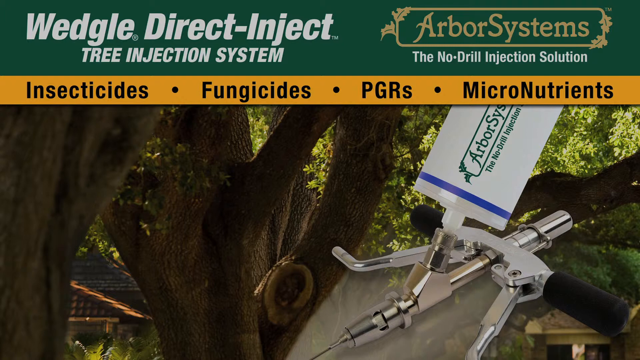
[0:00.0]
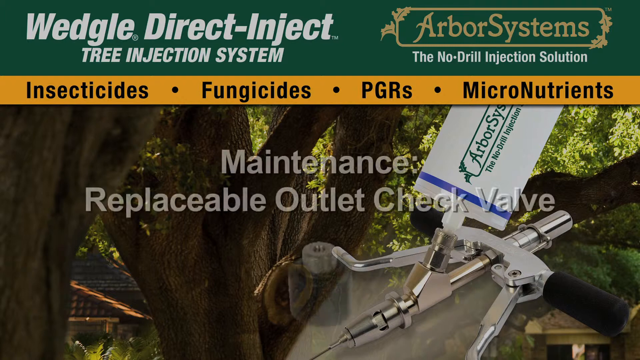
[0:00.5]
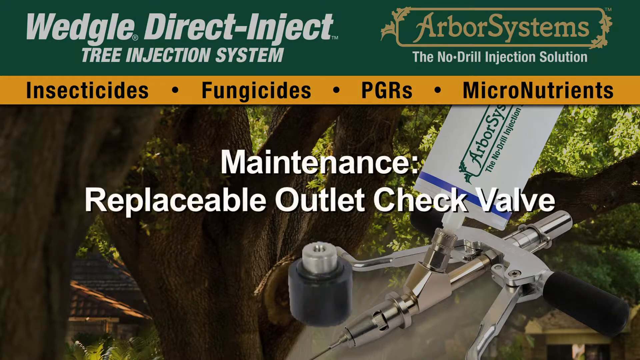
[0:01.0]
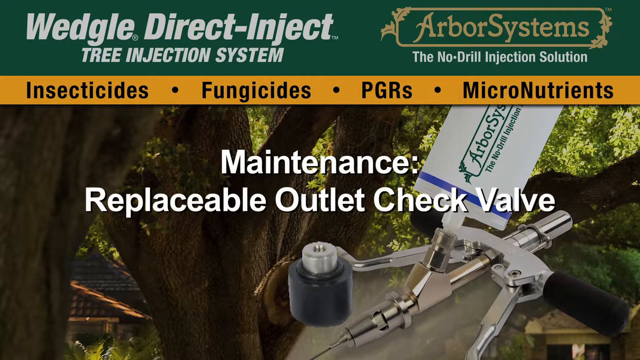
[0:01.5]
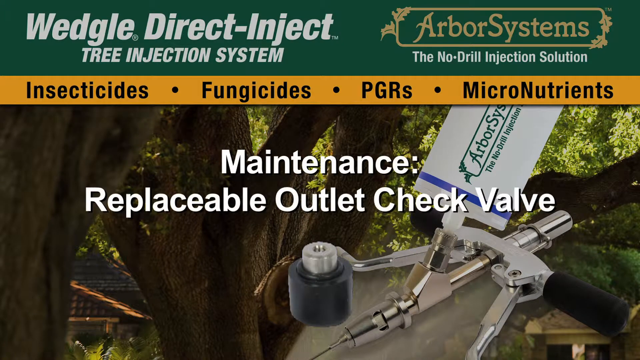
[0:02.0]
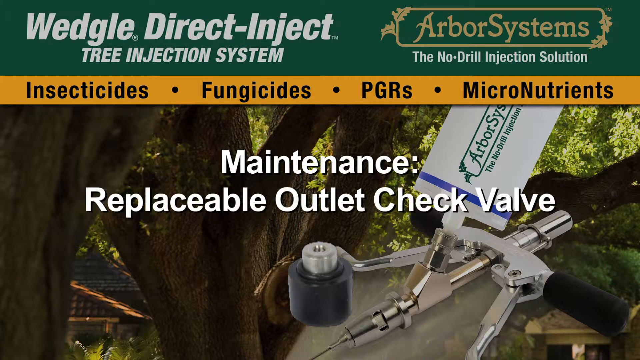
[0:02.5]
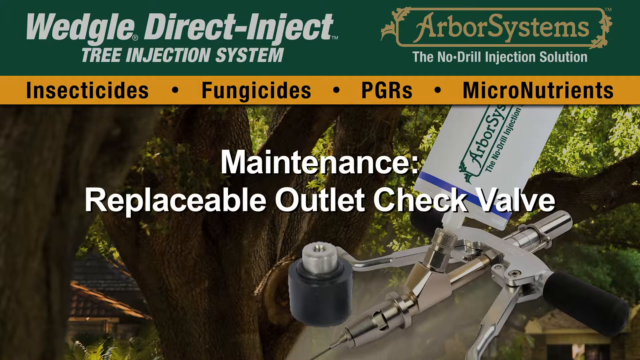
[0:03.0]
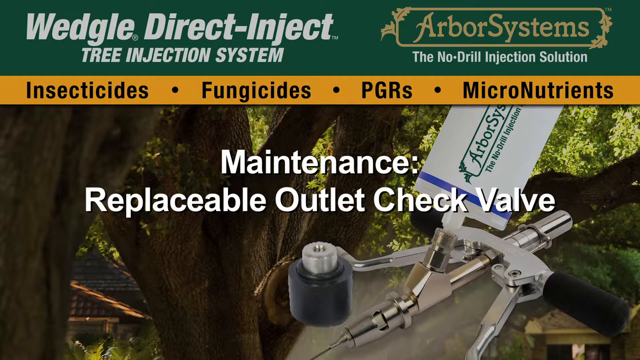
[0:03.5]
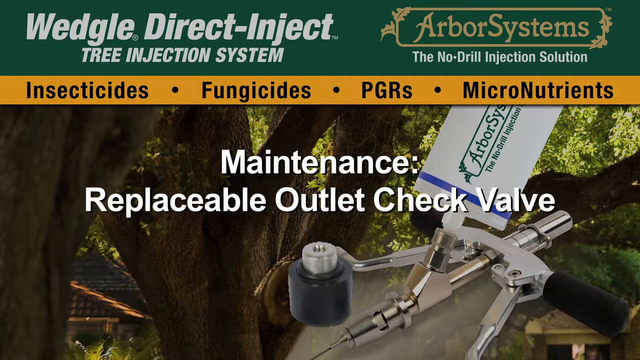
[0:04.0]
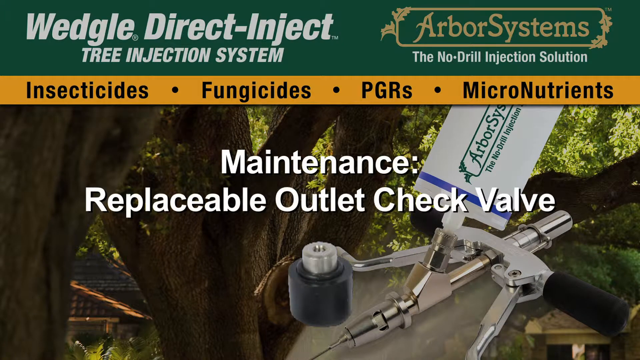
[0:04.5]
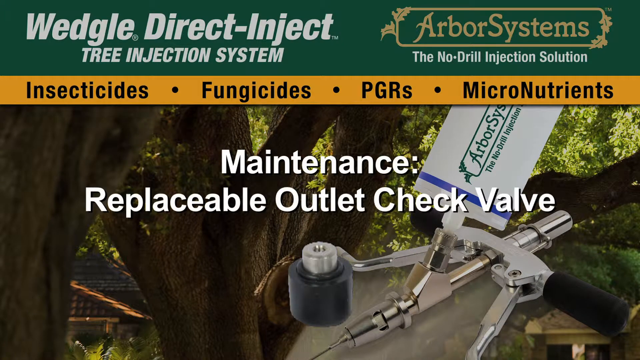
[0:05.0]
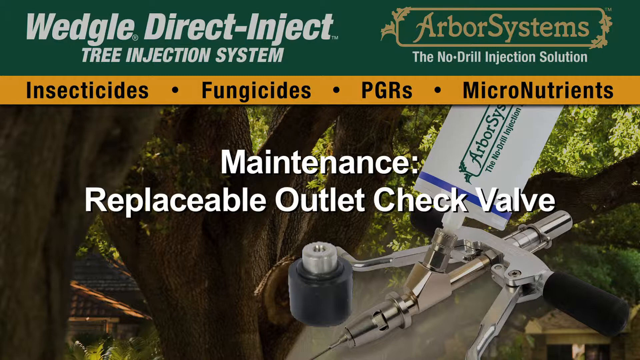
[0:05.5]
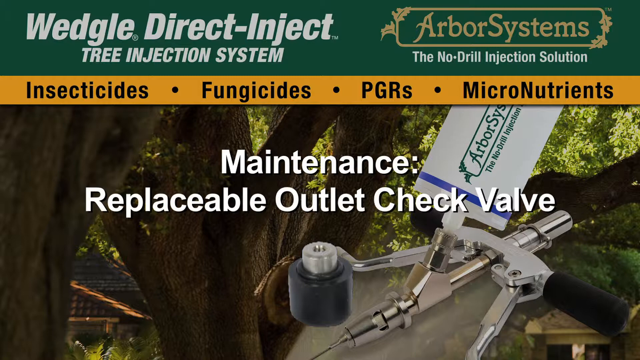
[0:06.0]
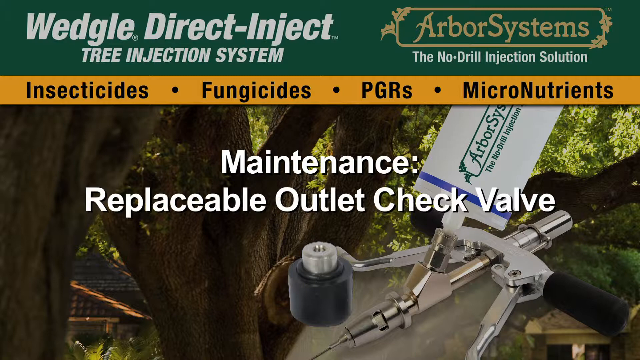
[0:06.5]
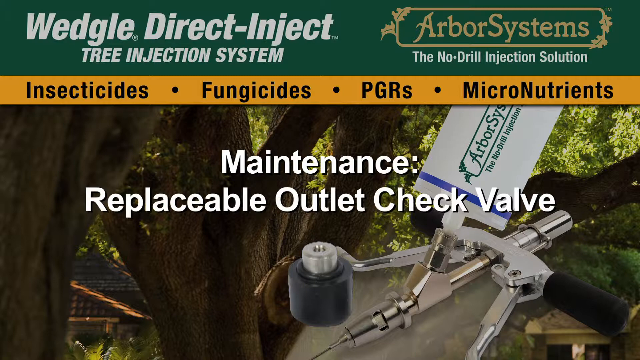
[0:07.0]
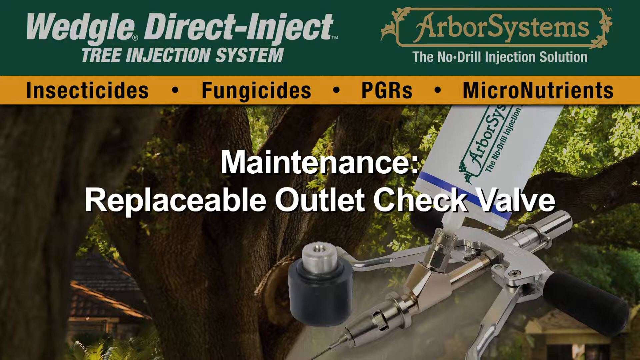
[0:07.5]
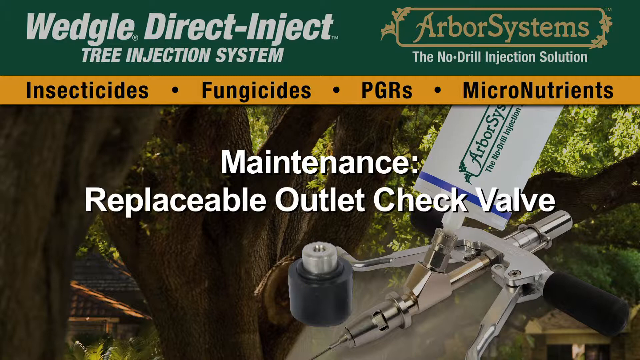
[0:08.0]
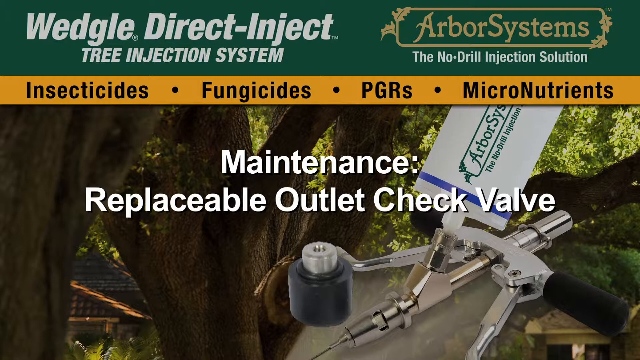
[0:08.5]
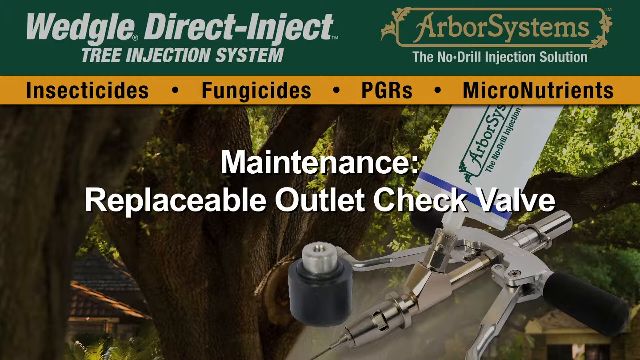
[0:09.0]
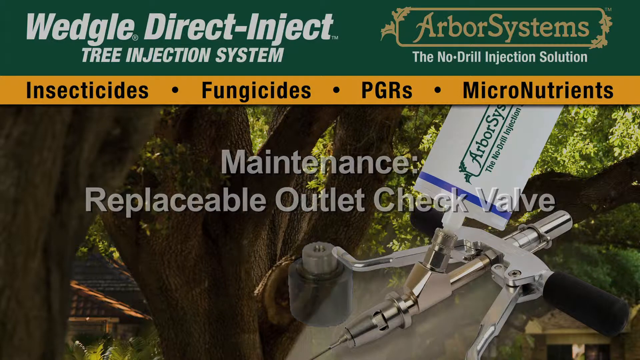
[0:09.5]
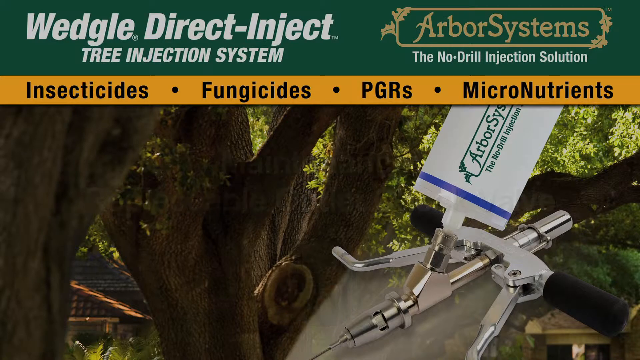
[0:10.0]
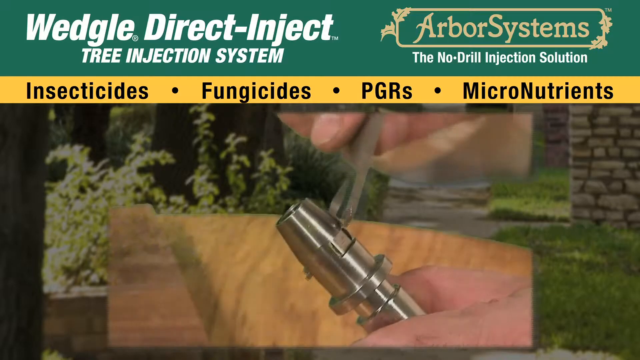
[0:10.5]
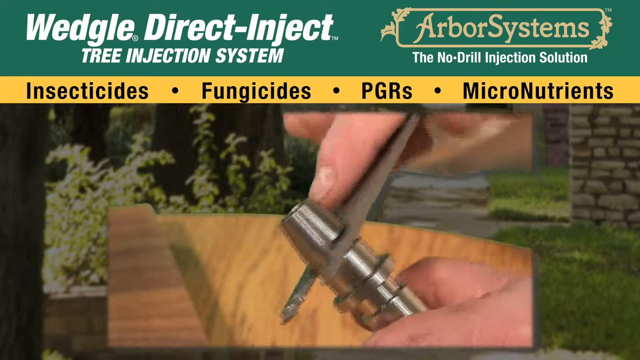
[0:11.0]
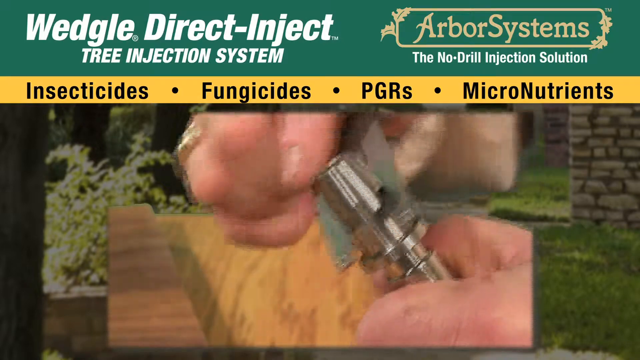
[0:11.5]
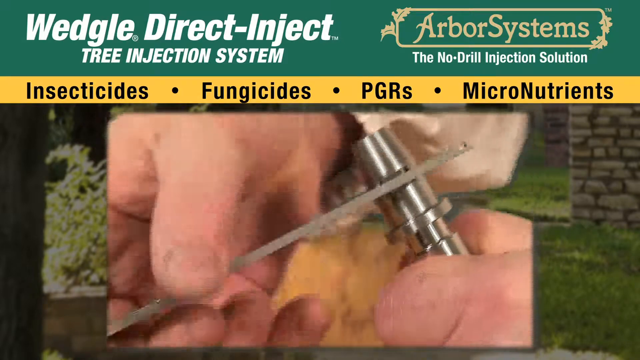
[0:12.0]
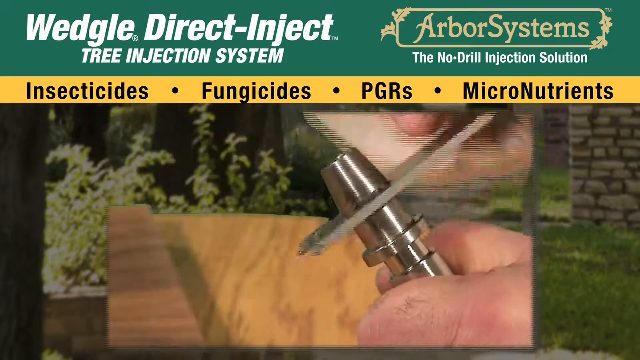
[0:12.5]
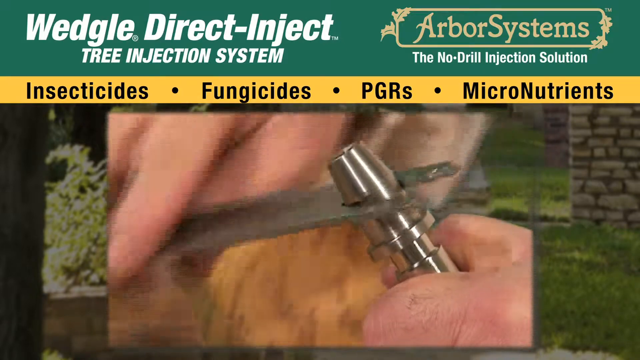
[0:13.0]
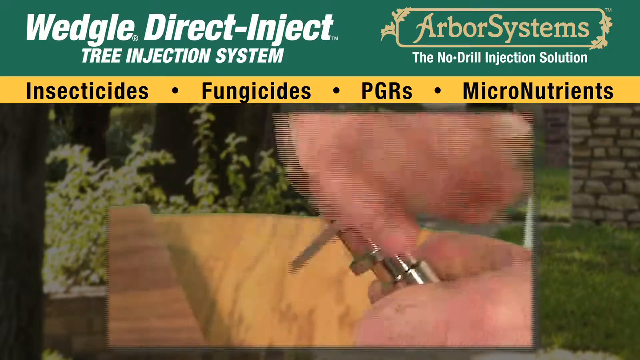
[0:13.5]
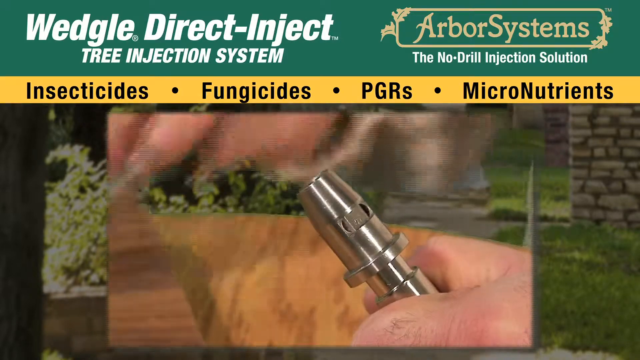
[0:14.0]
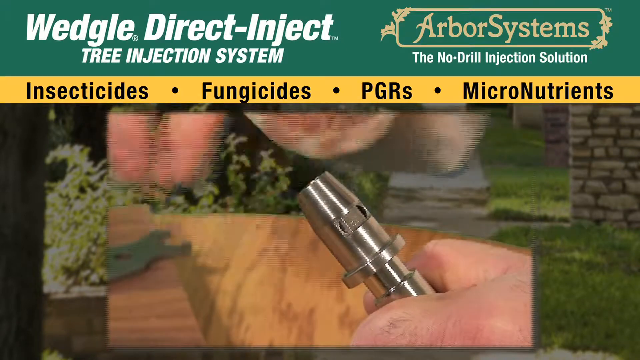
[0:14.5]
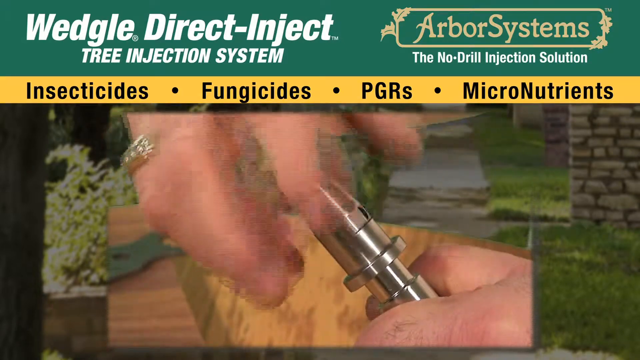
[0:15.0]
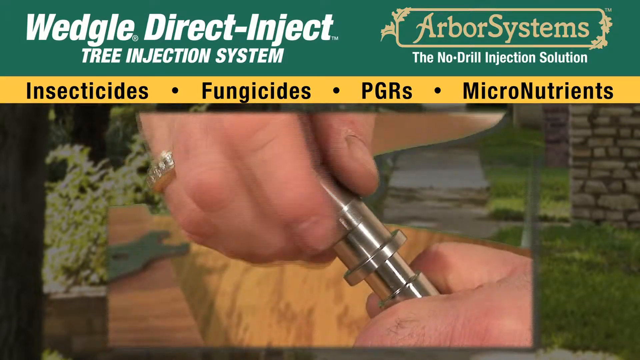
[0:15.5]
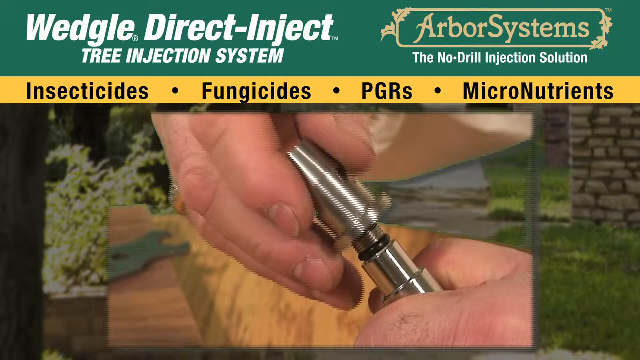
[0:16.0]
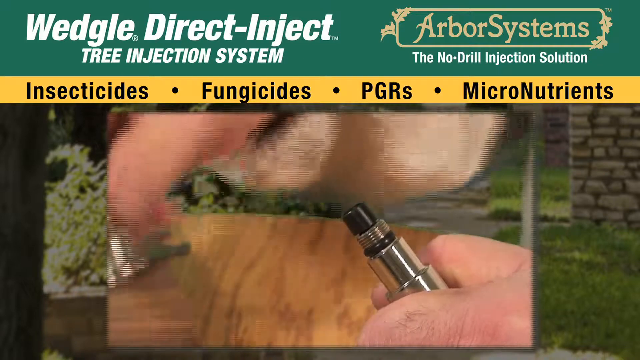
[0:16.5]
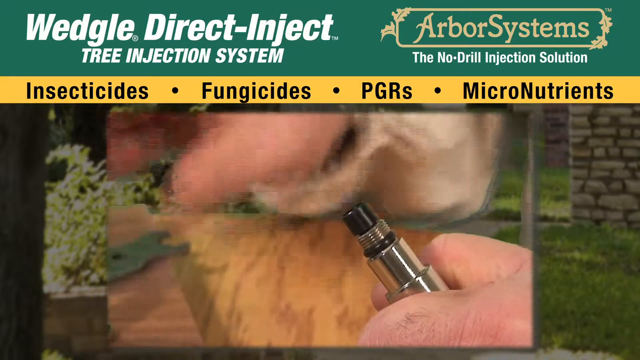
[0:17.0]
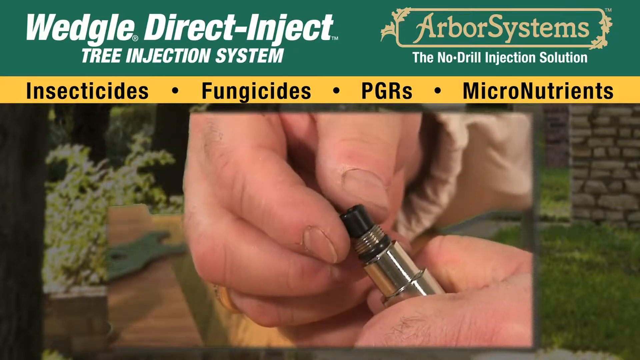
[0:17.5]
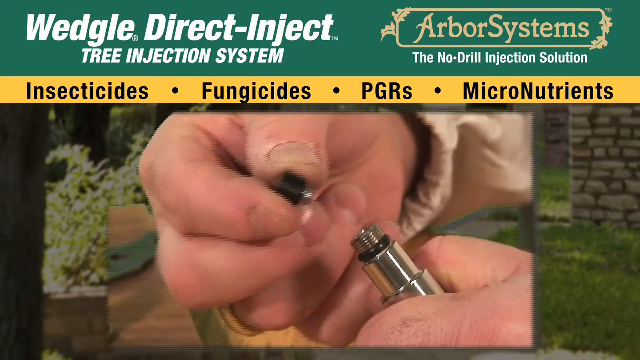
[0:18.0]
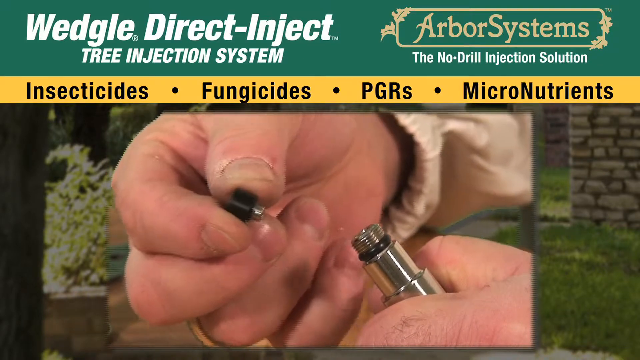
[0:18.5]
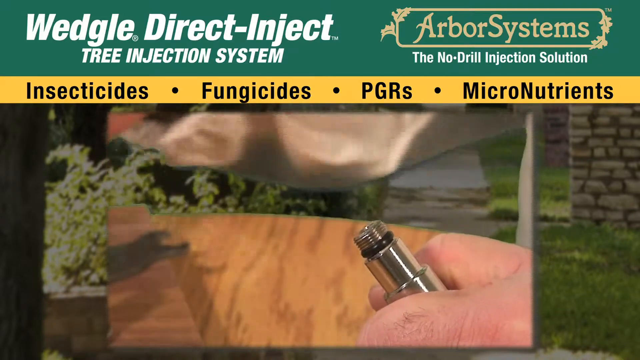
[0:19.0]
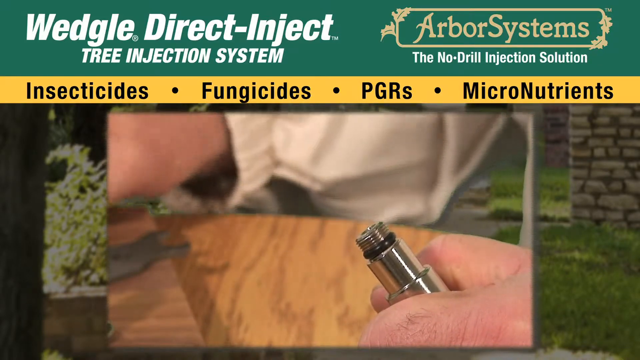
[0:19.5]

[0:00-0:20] A title and logo at the top of the frame read "Wedgel Direct Inject Tree Injection System, Arbor System, the No-Drill Injection Solution." Below them, action shots show insecticides, fungicides, PGRs, and micronutrients being injected into a nozzle, which is apparently meant for treating trees.